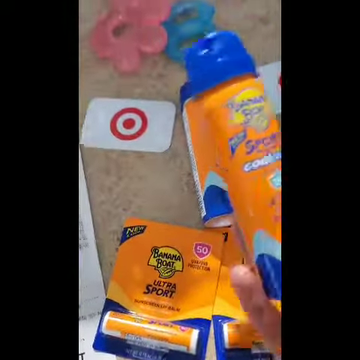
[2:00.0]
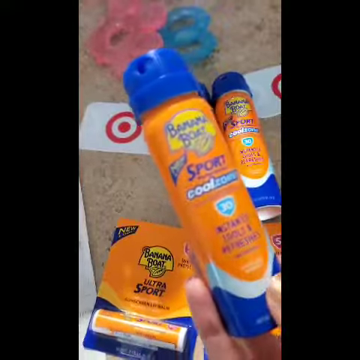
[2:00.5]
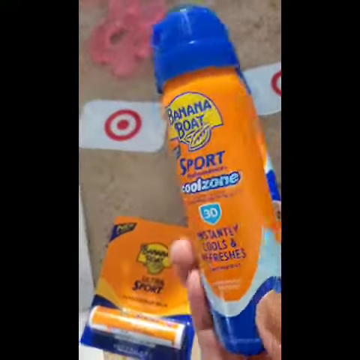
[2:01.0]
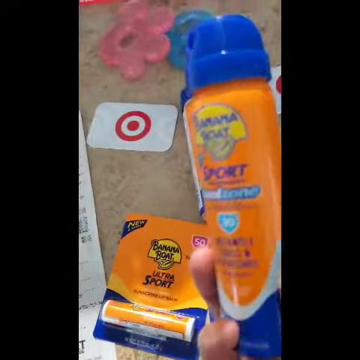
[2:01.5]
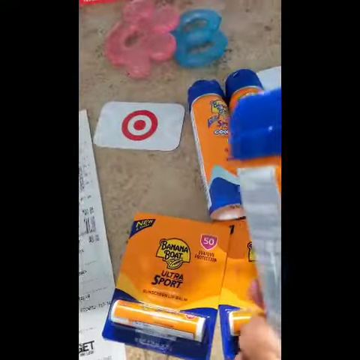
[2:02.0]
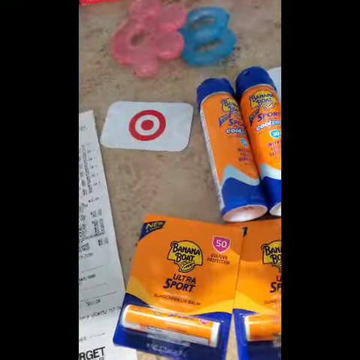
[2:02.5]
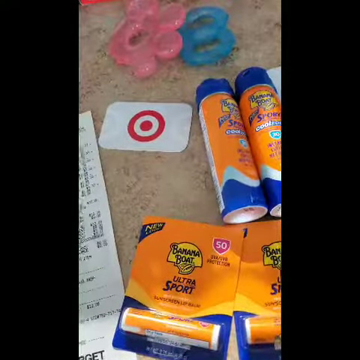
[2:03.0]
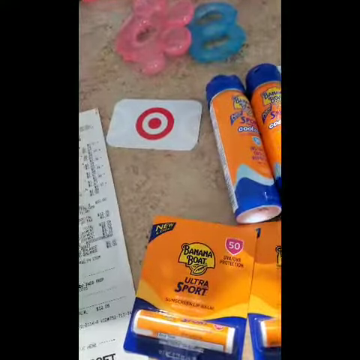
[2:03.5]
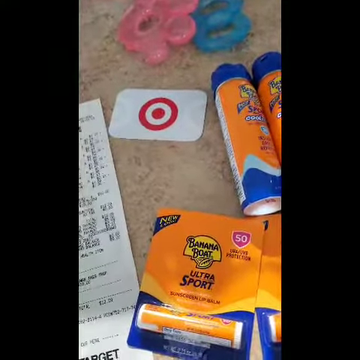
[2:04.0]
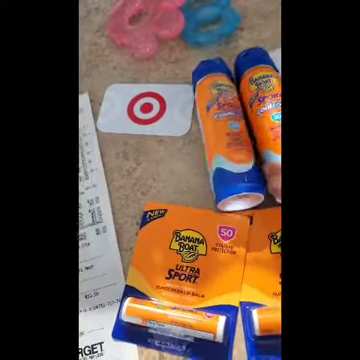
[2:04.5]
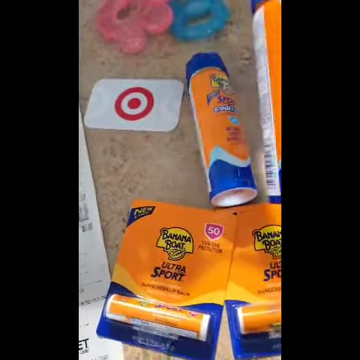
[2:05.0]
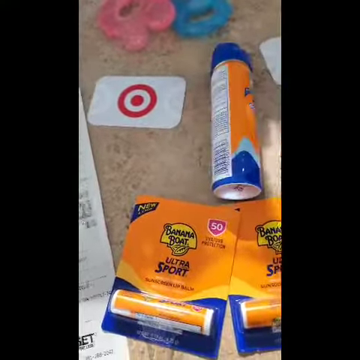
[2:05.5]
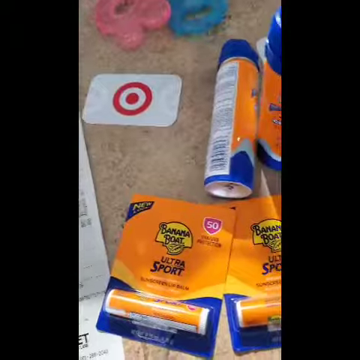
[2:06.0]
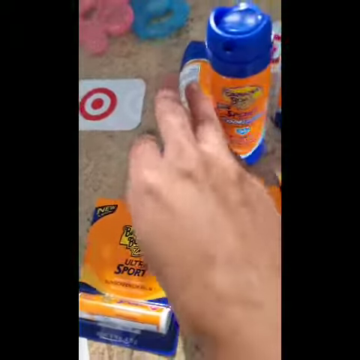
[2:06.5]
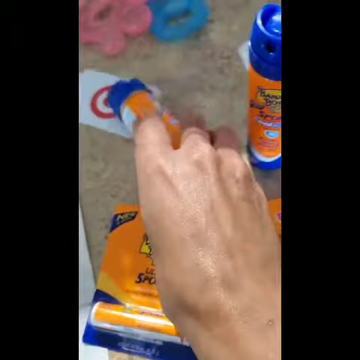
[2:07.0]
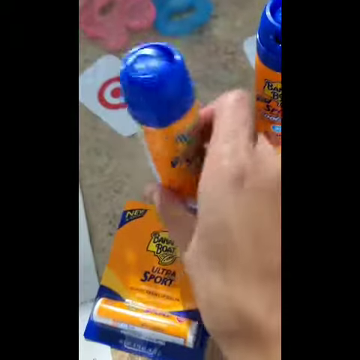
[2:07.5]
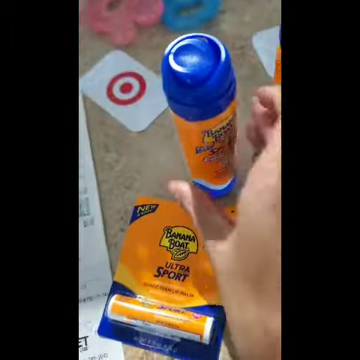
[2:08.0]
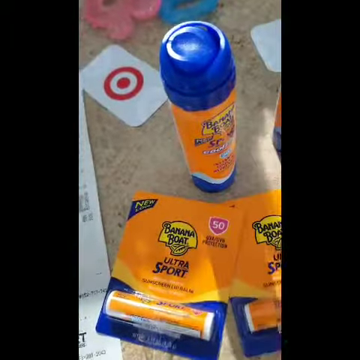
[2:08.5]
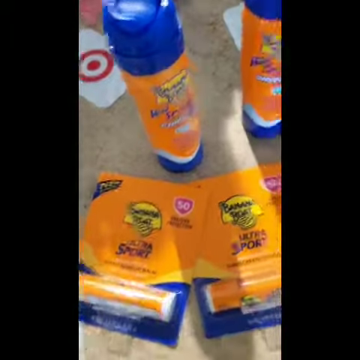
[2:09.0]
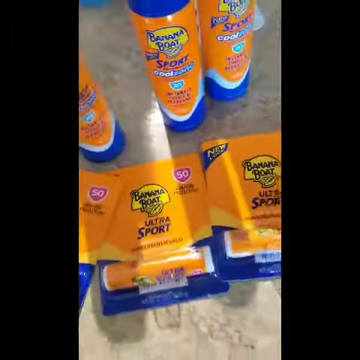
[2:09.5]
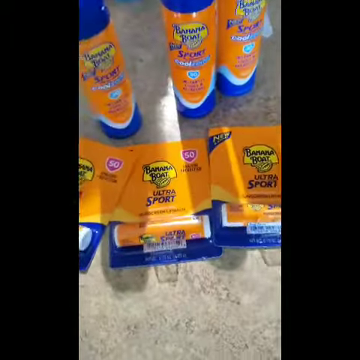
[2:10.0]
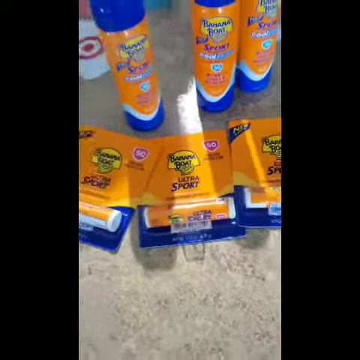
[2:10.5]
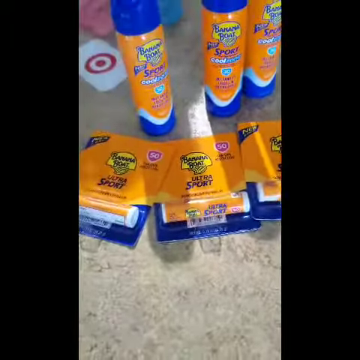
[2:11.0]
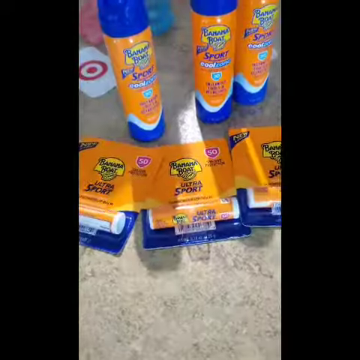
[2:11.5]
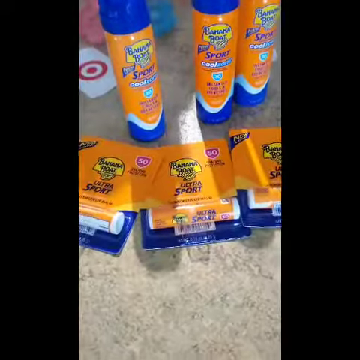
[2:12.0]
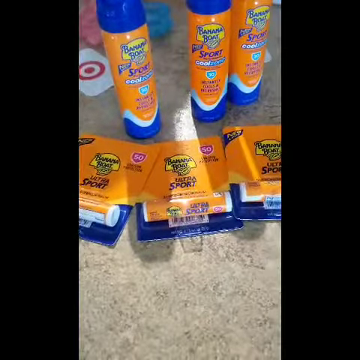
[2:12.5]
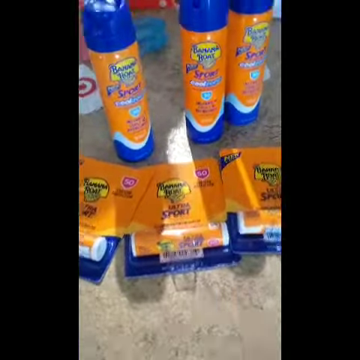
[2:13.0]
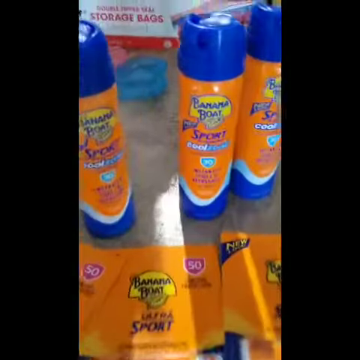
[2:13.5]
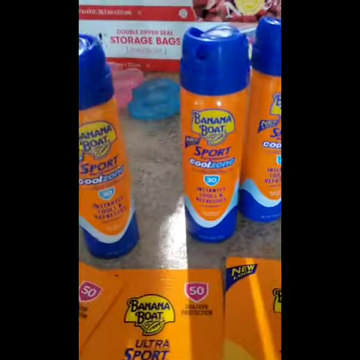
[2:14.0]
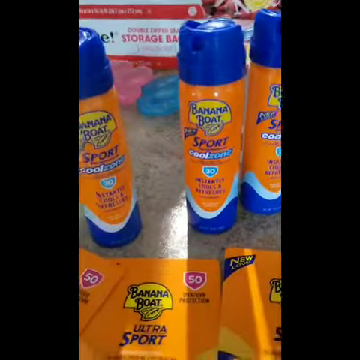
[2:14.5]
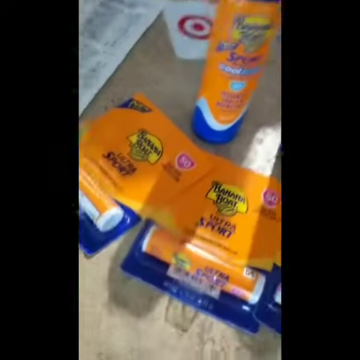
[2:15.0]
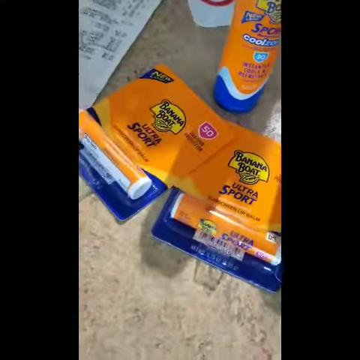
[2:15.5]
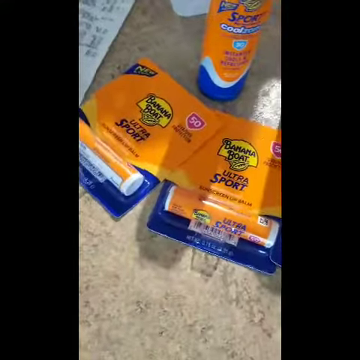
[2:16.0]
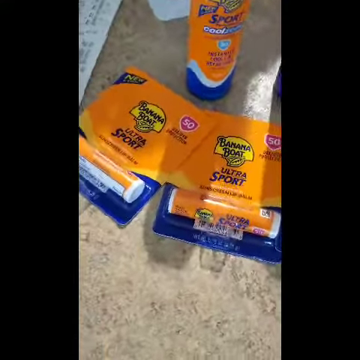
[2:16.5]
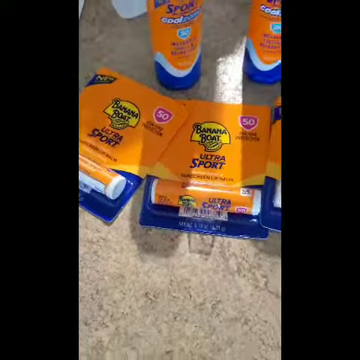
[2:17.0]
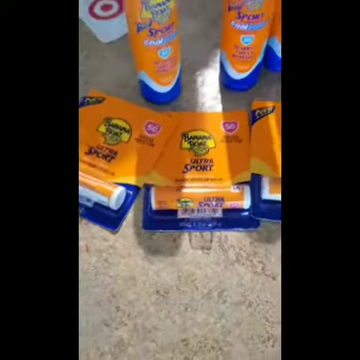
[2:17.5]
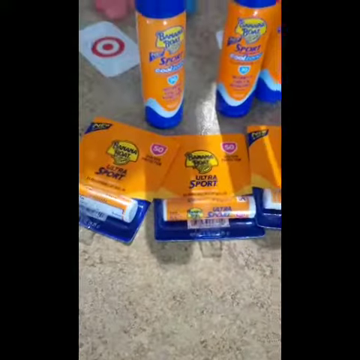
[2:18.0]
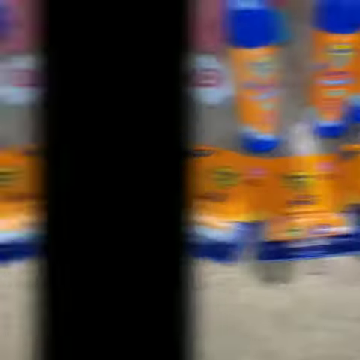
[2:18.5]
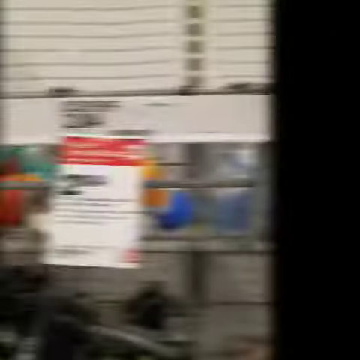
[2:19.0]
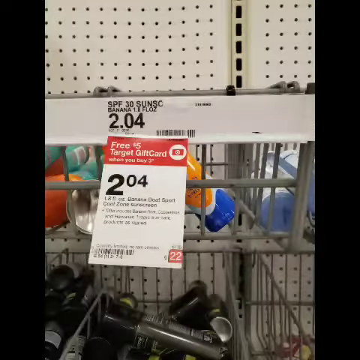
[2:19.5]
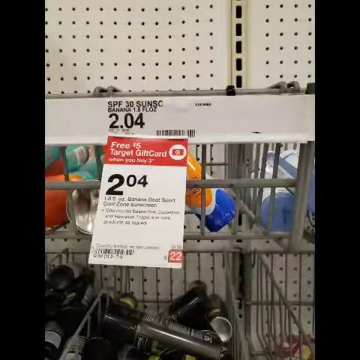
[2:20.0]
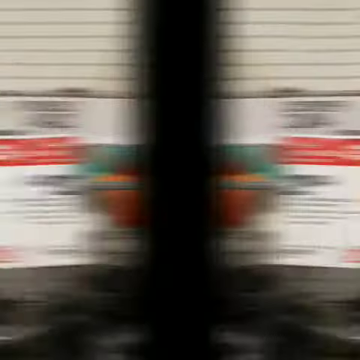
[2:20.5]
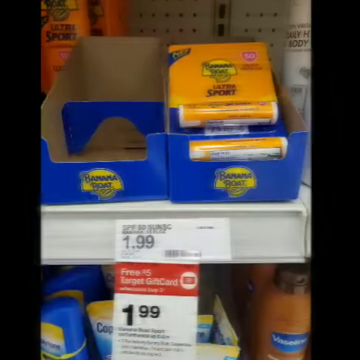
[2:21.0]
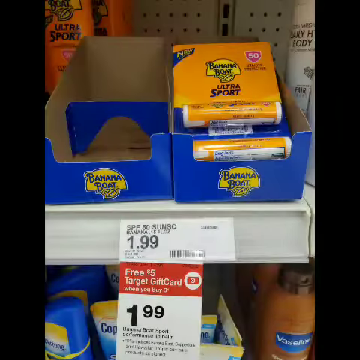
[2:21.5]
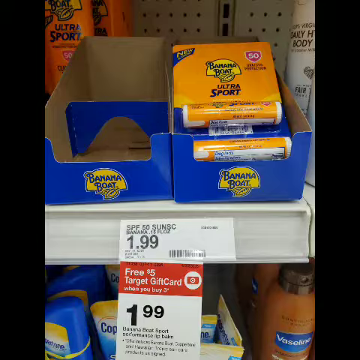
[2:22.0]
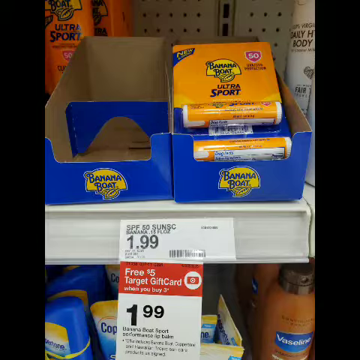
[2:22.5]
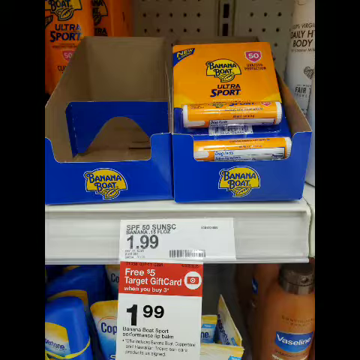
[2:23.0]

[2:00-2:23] A hand holds a bottle of the aerosol Banana Boat sunscreen and spins it around, then puts it down, picks up the other two bottles that were laying down, and stands them up. The camera zooms out to show the three aerosol spray cans of Banana Boat Sport sunscreen and the three packages of Banana Boat Ultra Sport sunscreen lip balms. The Target gift card is visible more clearly in the upper left corner. The camera zooms in on the sunscreens and on the lip balms, and at the top of the screen are a blue toy and a pink toy that vaguely look like rattles. The video quickly cuts to a store shelf where the sunscreen would have been stocked, showing a price of $2.04 and a tag in the sunscreen section offering a free $5 Target gift card when three of the products are bought. It then cuts to a photo of the shelf where the Banana Boat sunscreen lip balm was, which is empty: on the left is an empty box, and on the right is a box that still has a few lip balms in it. Their price is $1.99, again with the free $5 Target gift card for purchasing three. The video ends after this scene.